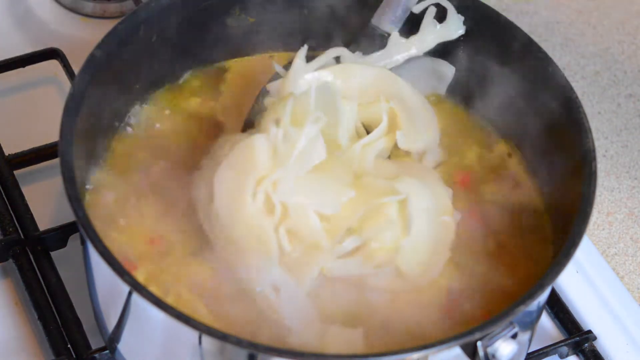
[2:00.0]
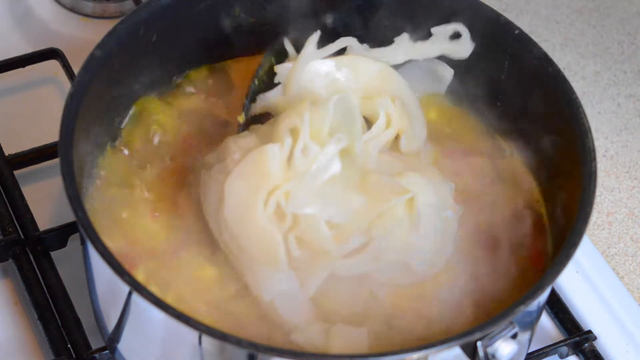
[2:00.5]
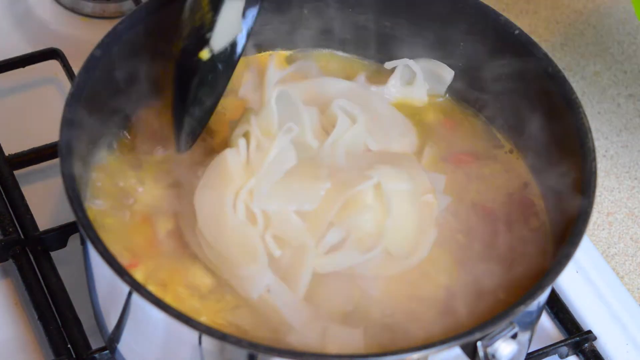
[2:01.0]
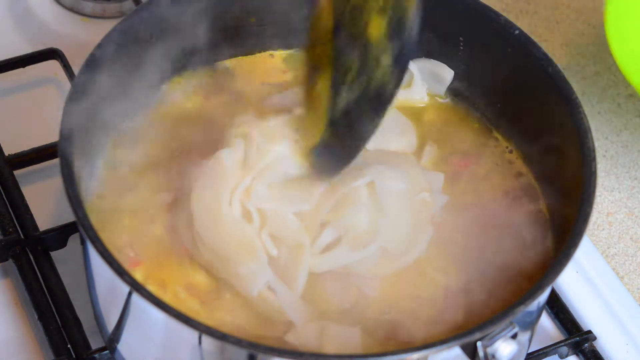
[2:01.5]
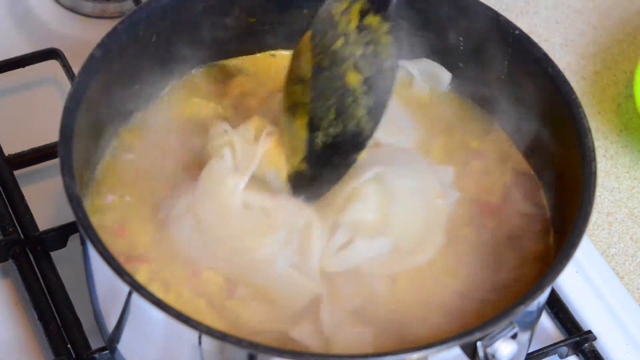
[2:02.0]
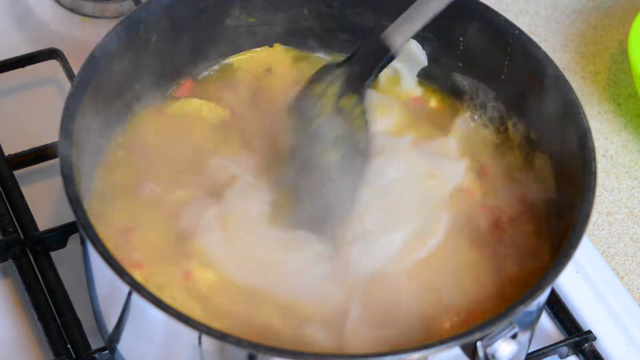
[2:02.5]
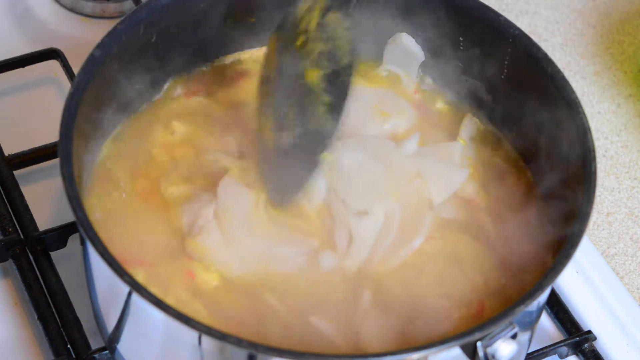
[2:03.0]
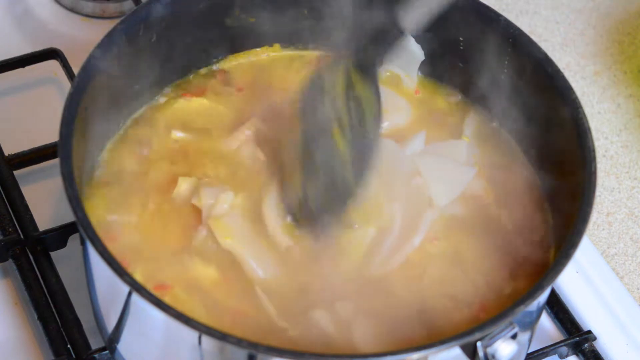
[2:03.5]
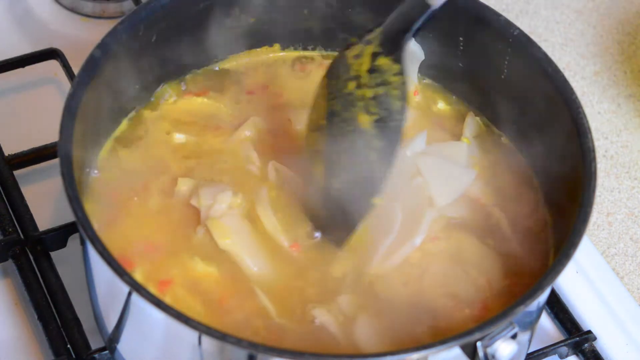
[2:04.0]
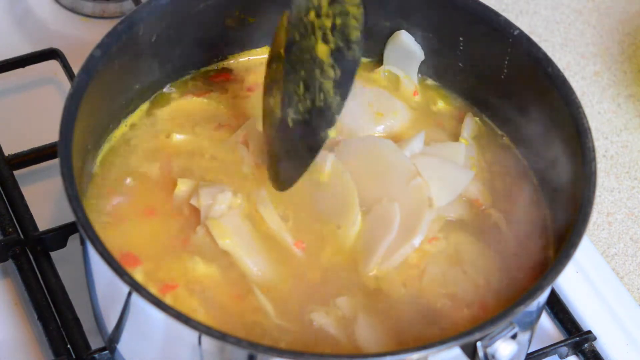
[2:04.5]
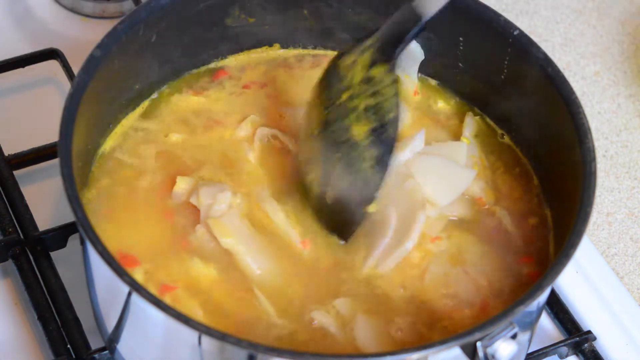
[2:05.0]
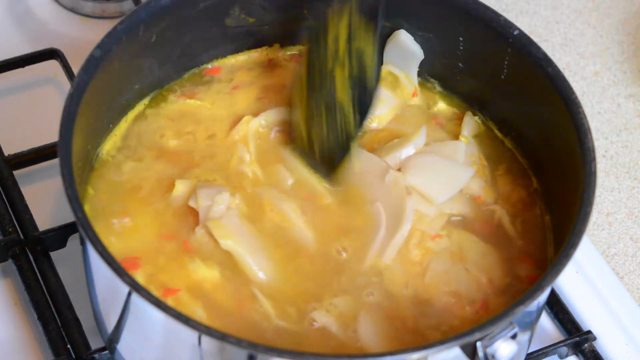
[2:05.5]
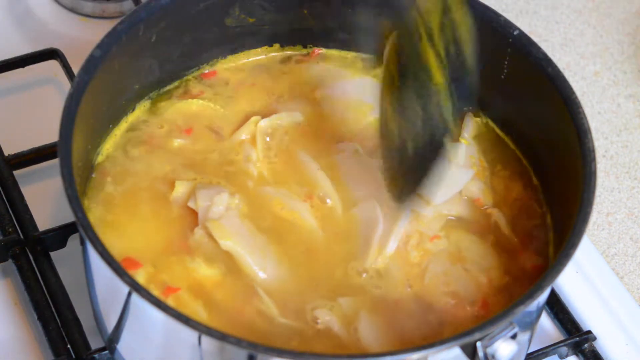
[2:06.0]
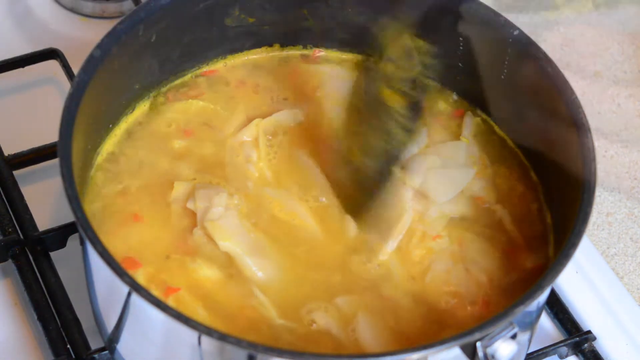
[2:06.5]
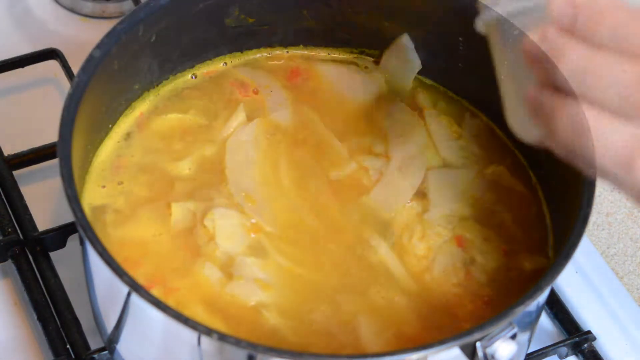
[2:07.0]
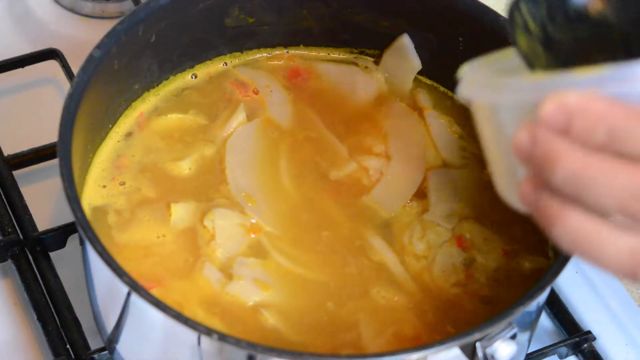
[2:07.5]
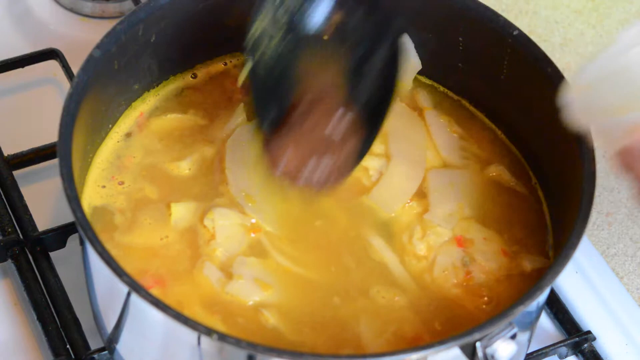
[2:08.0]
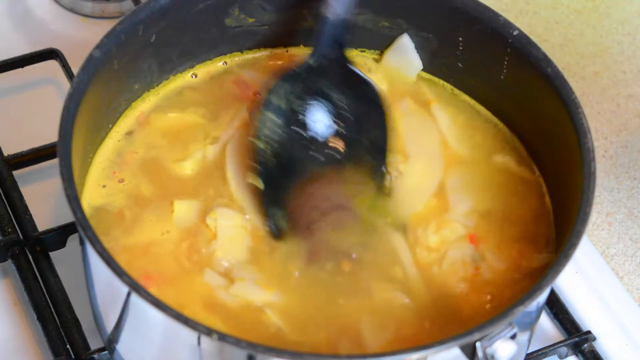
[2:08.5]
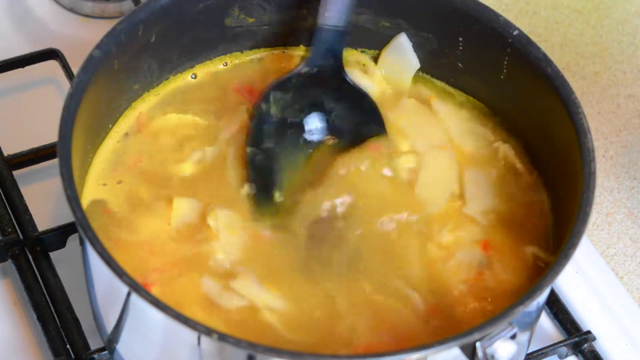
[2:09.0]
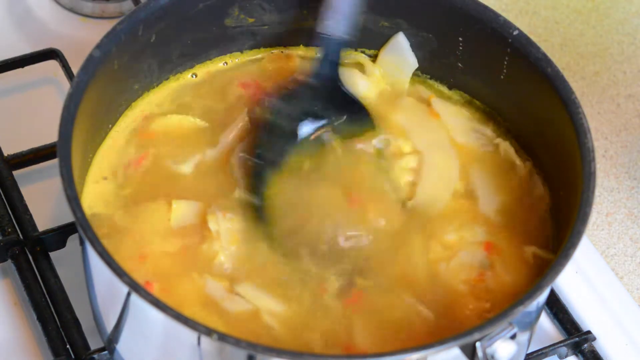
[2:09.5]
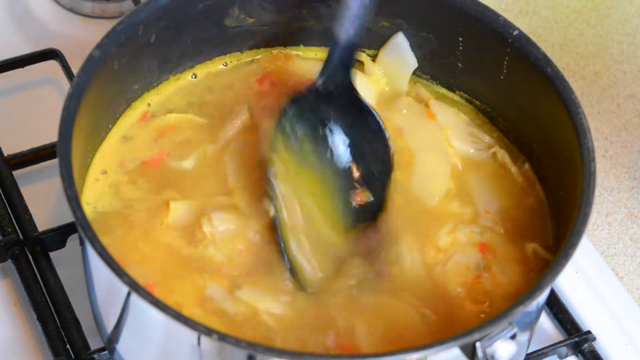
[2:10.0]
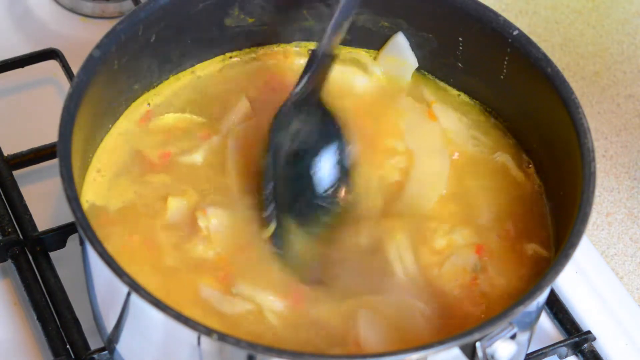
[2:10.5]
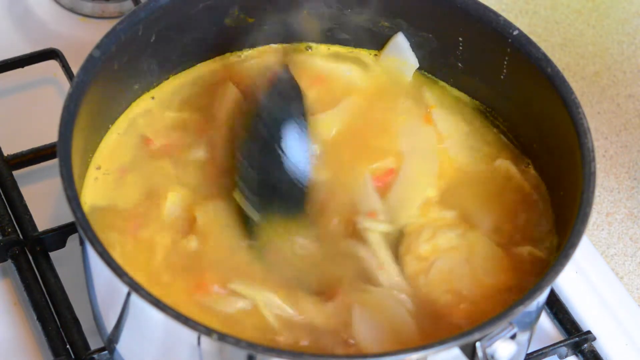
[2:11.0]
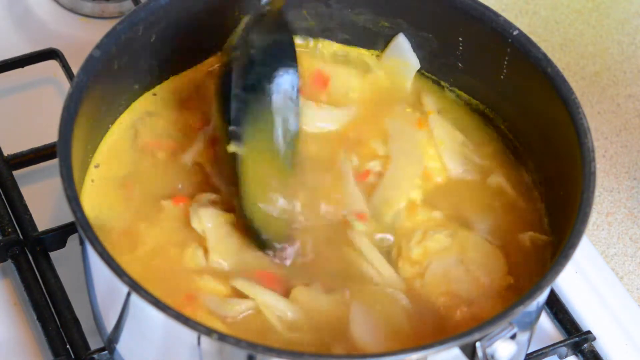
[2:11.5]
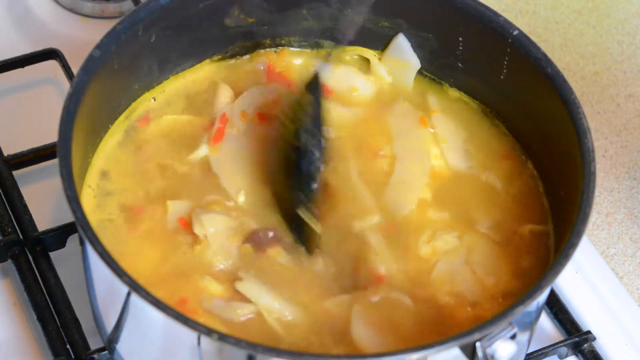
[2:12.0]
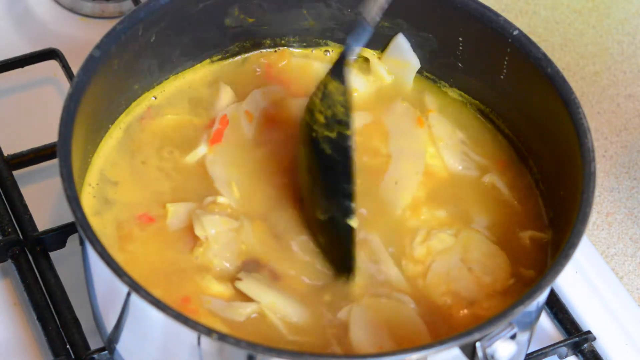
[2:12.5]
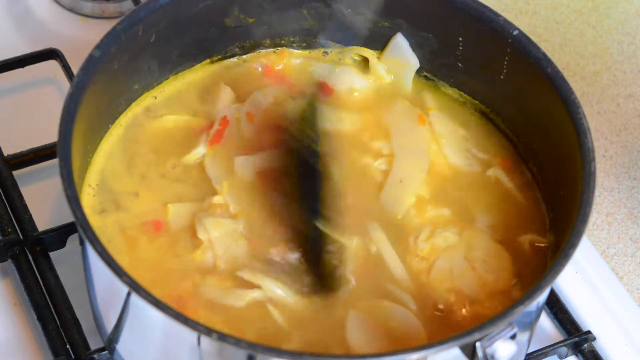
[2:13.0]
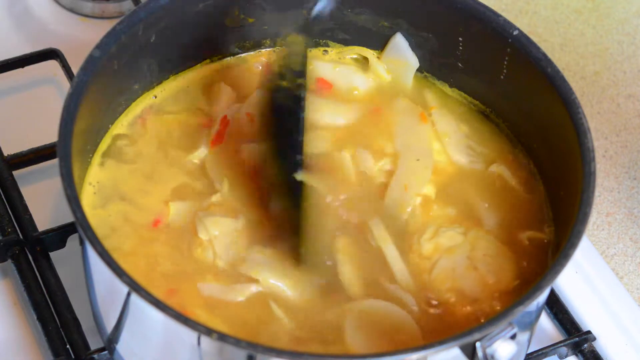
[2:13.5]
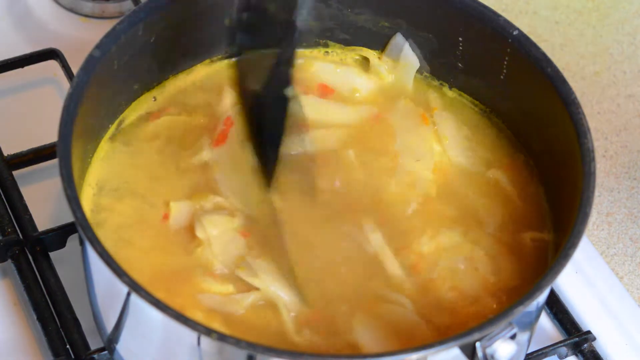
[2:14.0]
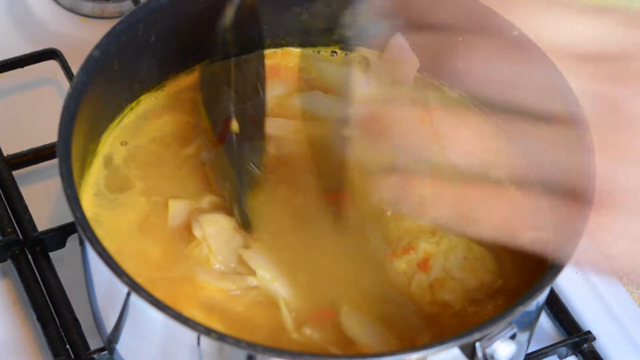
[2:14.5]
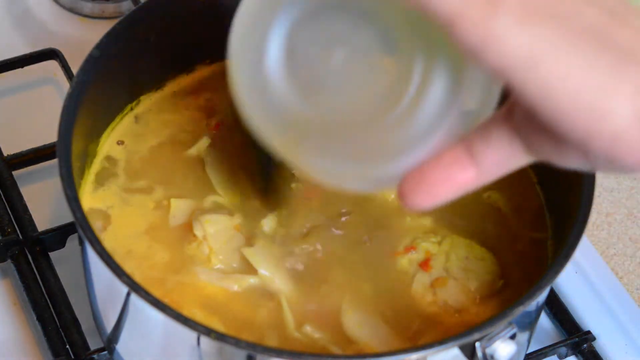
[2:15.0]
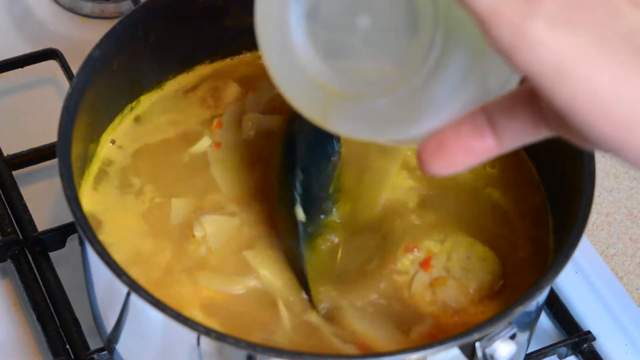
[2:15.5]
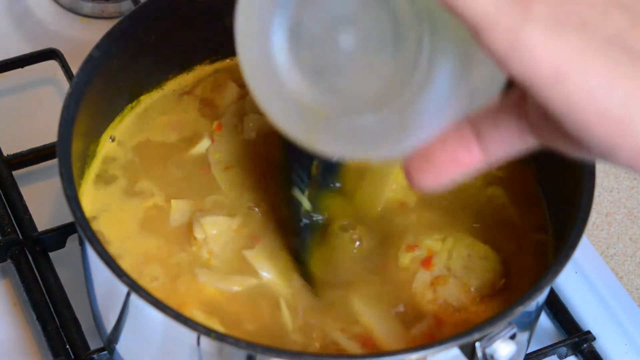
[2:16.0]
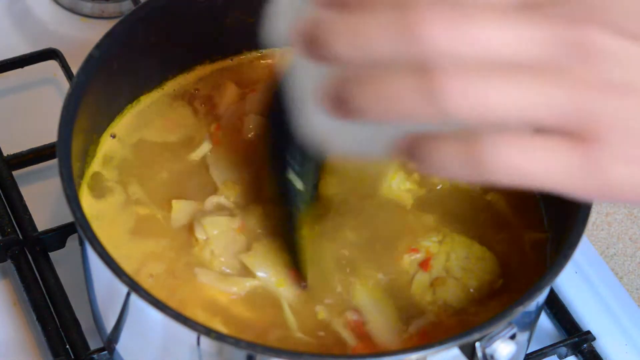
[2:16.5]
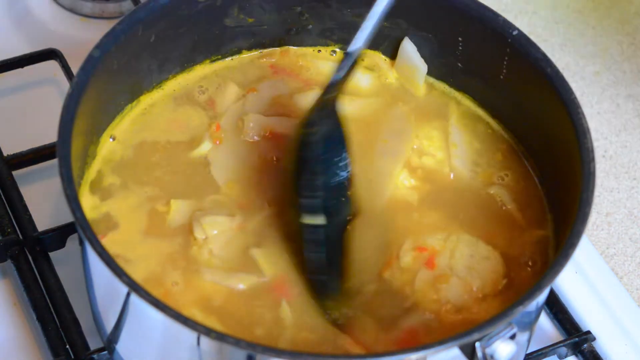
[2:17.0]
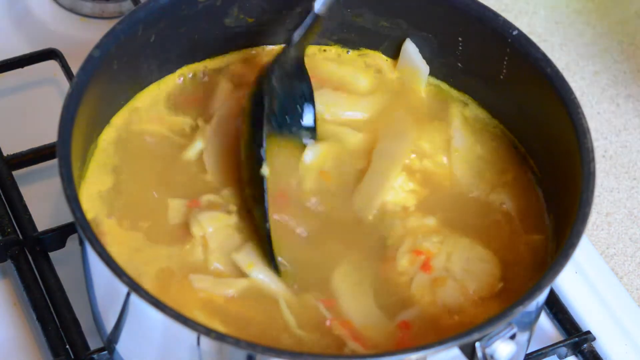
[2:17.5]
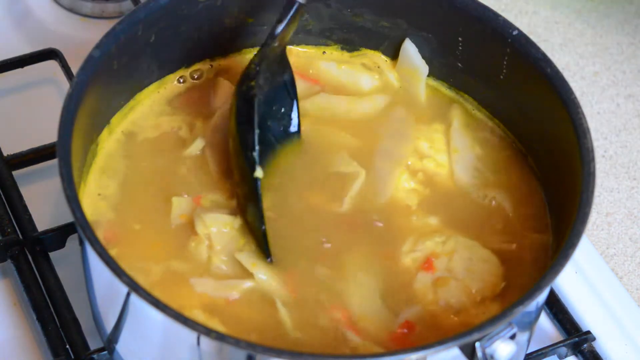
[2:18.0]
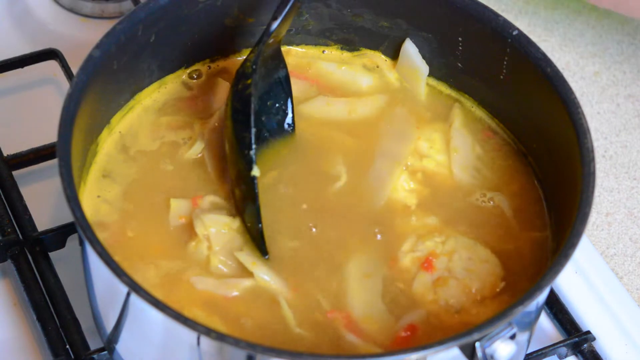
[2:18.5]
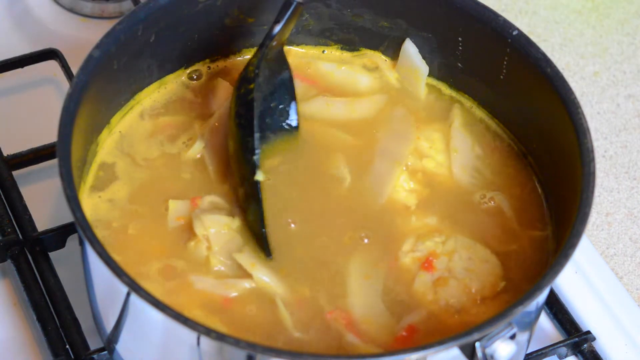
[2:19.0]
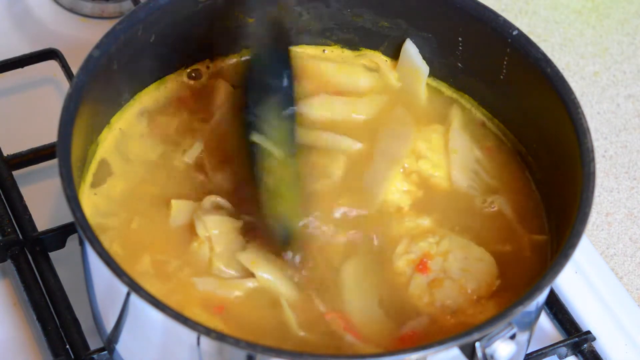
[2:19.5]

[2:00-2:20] A stew is boiling in a pot that is black inside and silver outside, and the black and silver spoon used for cooking is visible. It keeps boiling while he stirs. He adds a brown sauce of an unidentified kind and puts a lot of things in. There is fish inside, and an item that looks like a flower, though this is uncertain. A lime container and a lighter container are also visible. He keeps putting all the ingredients in the same pot, with the fish boiling in the soup.